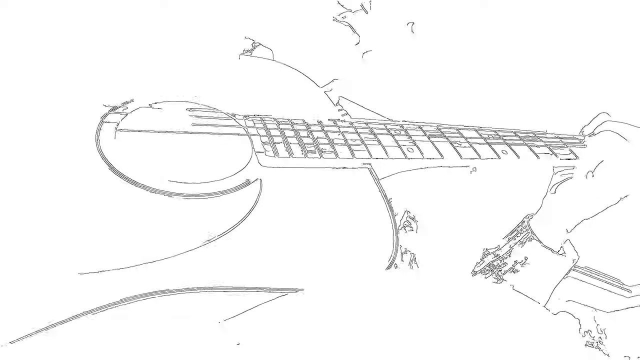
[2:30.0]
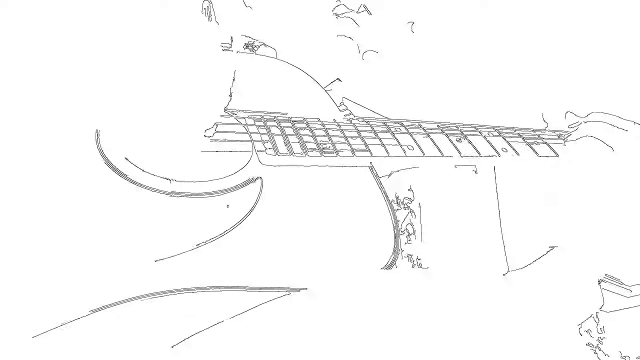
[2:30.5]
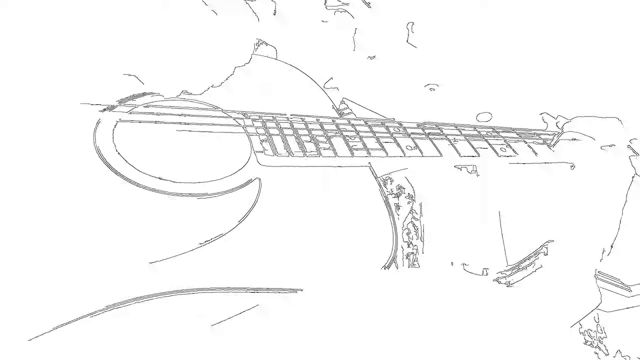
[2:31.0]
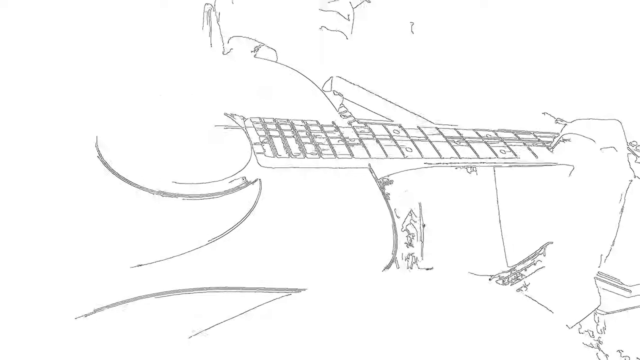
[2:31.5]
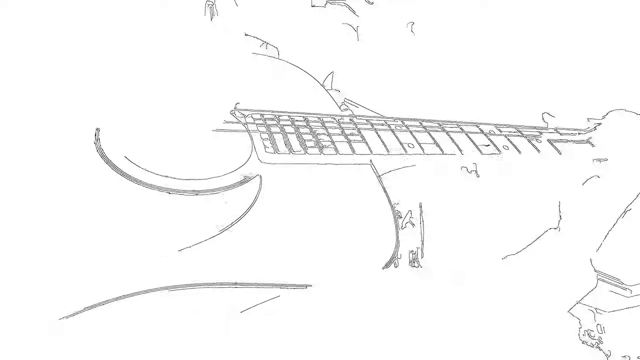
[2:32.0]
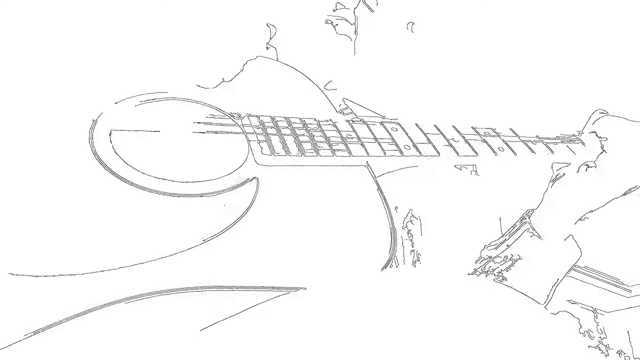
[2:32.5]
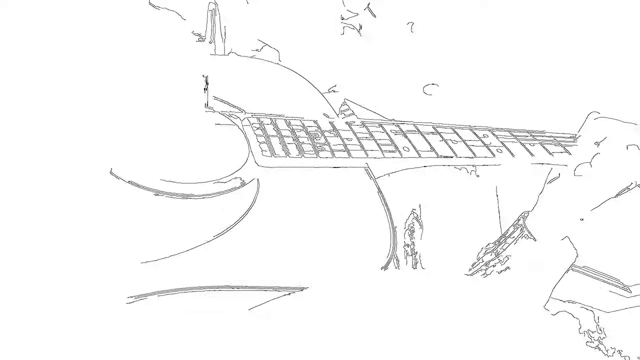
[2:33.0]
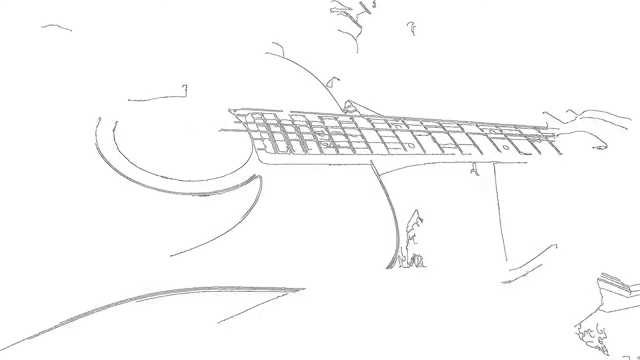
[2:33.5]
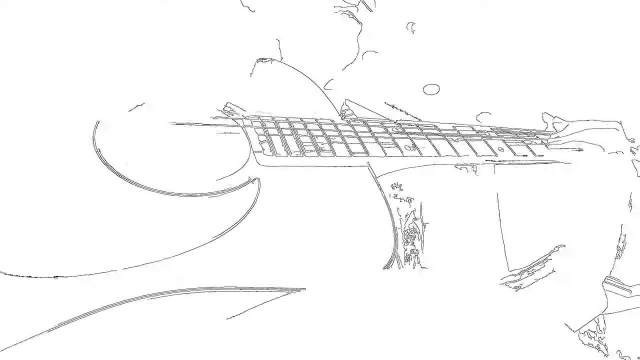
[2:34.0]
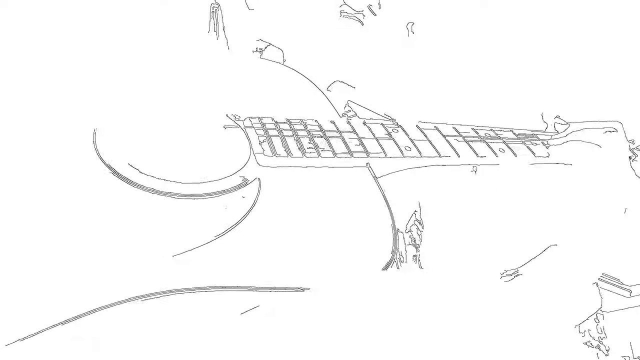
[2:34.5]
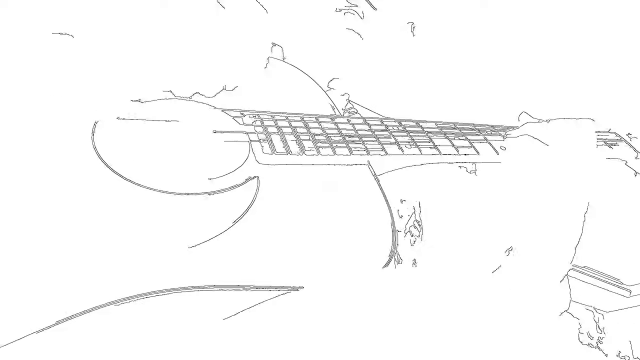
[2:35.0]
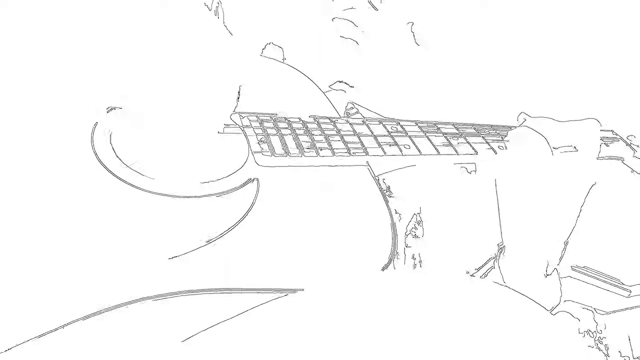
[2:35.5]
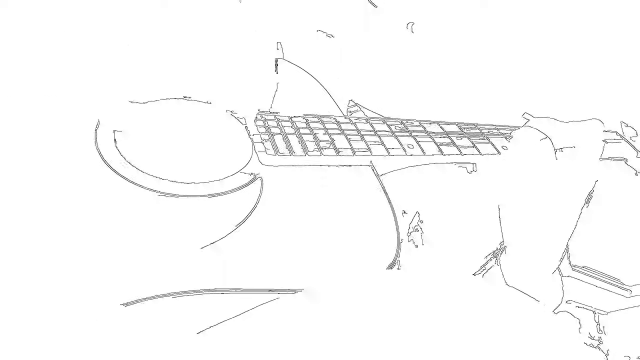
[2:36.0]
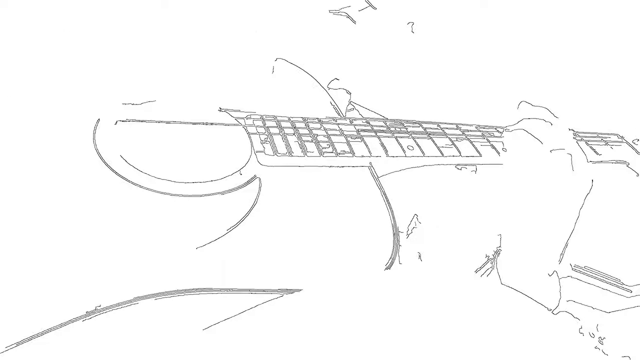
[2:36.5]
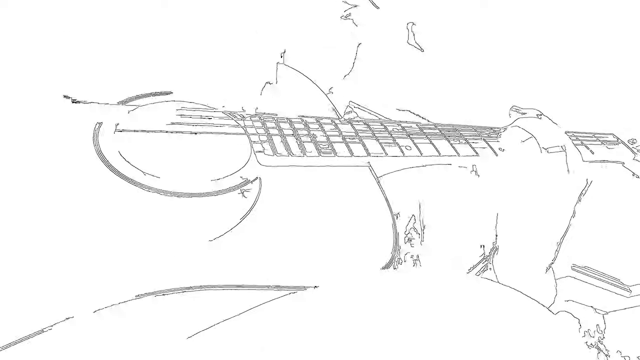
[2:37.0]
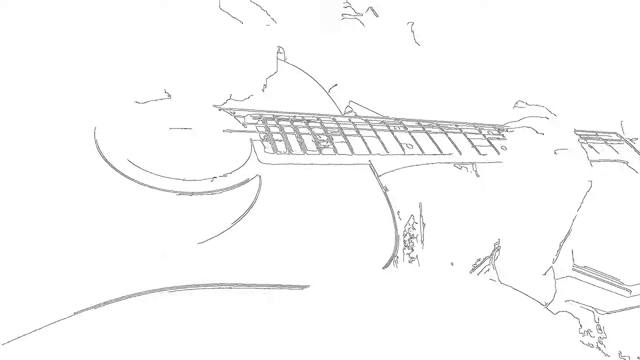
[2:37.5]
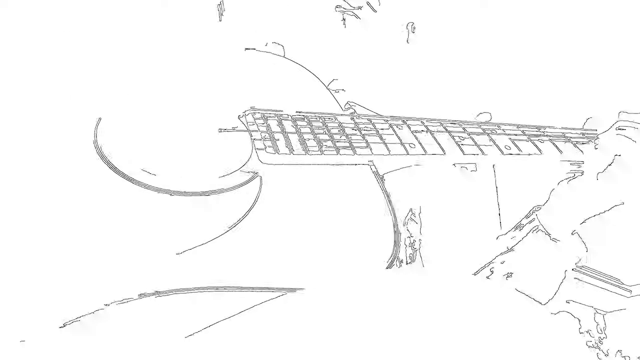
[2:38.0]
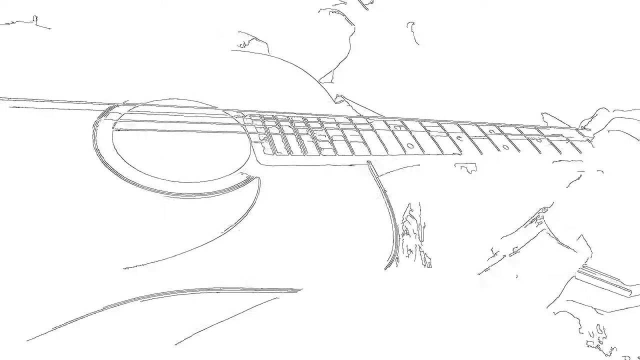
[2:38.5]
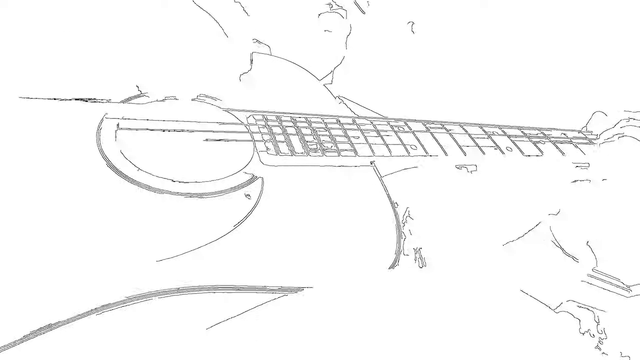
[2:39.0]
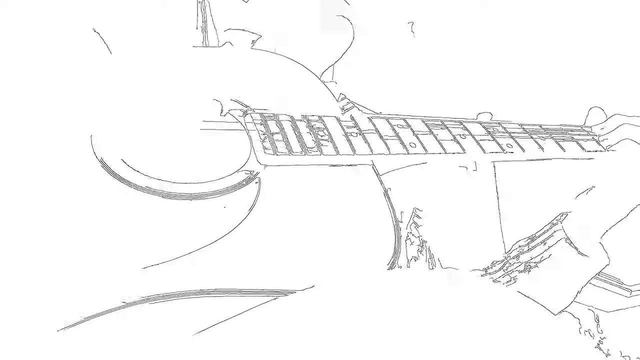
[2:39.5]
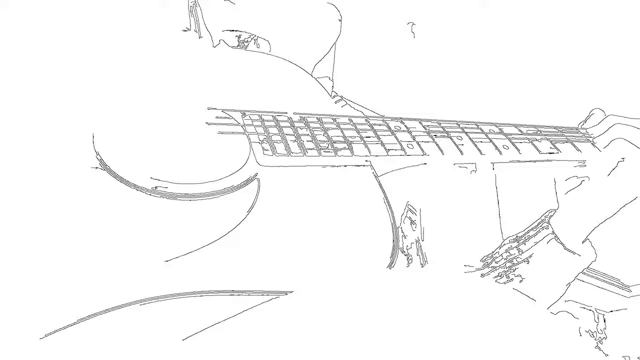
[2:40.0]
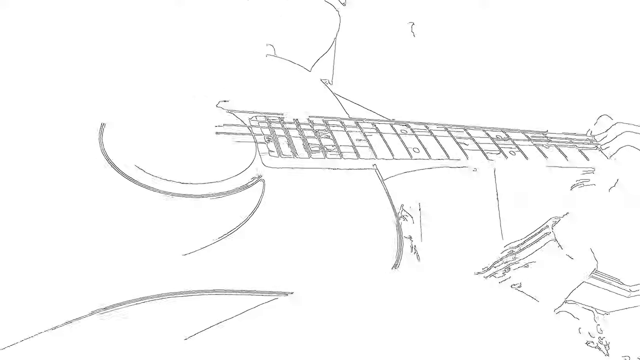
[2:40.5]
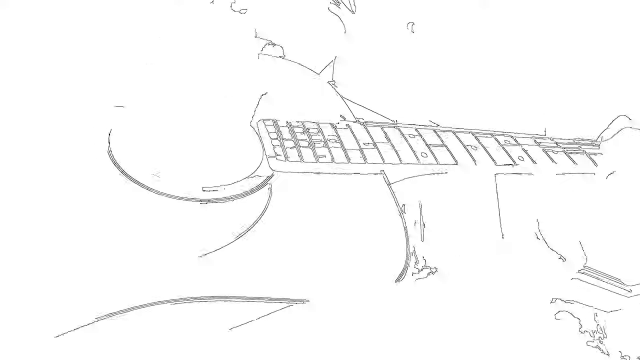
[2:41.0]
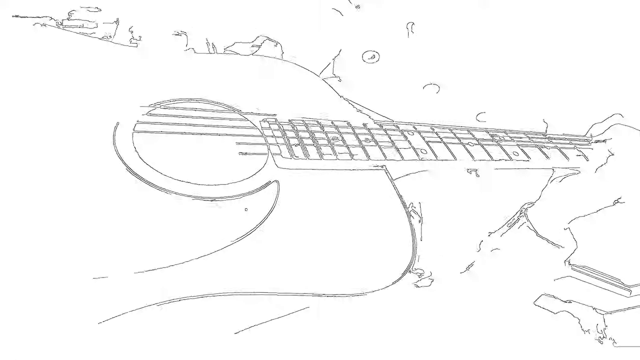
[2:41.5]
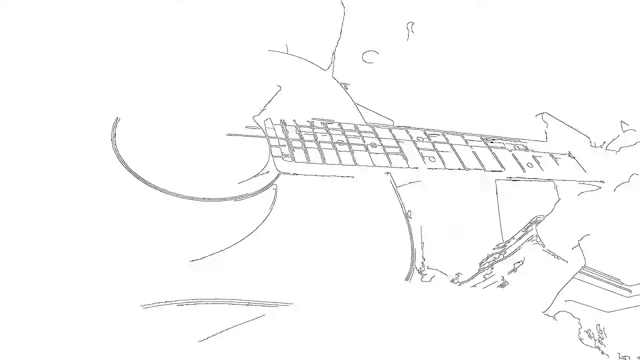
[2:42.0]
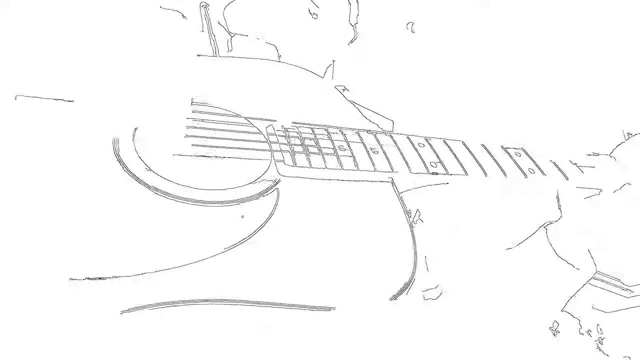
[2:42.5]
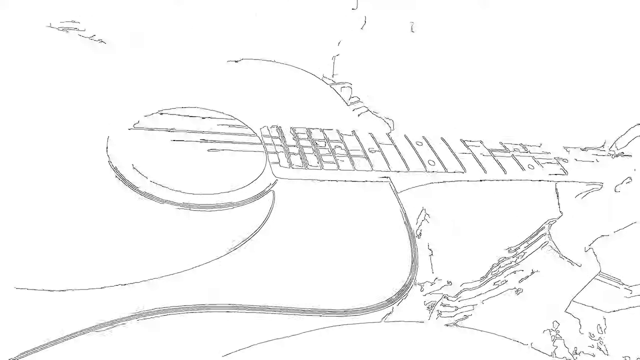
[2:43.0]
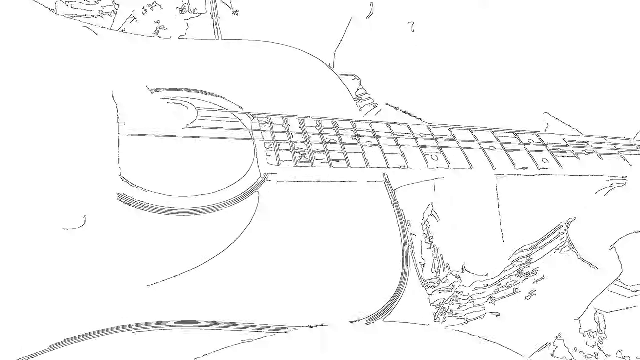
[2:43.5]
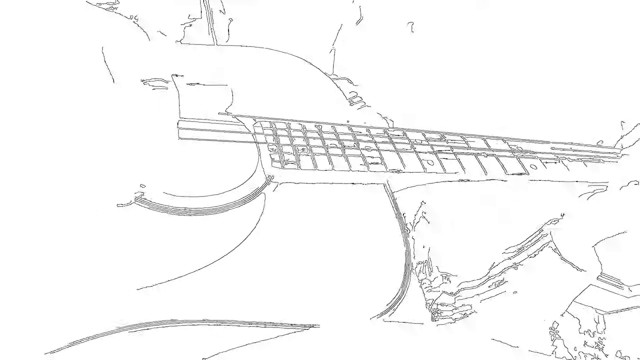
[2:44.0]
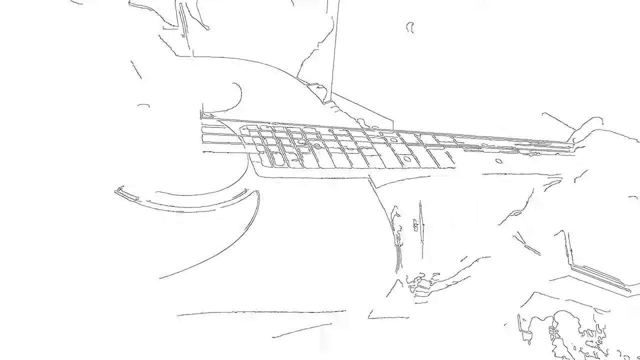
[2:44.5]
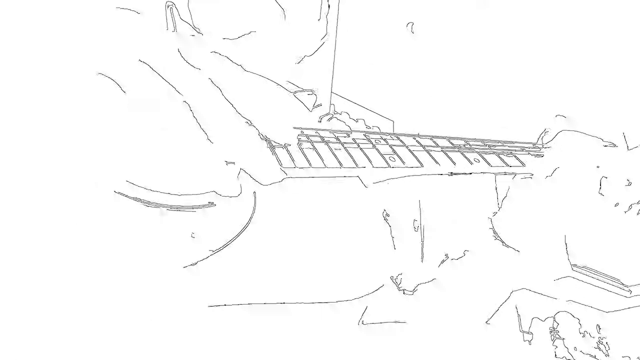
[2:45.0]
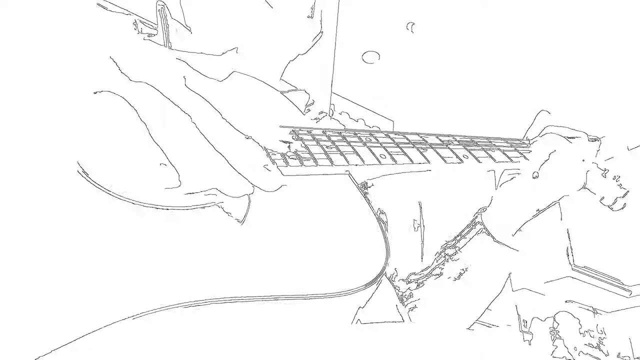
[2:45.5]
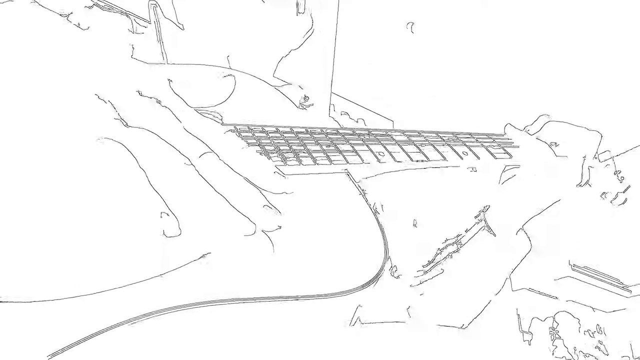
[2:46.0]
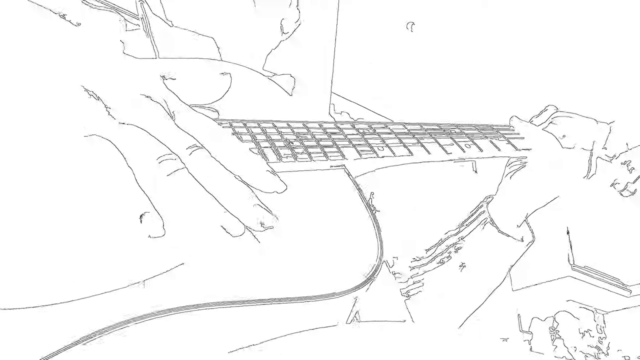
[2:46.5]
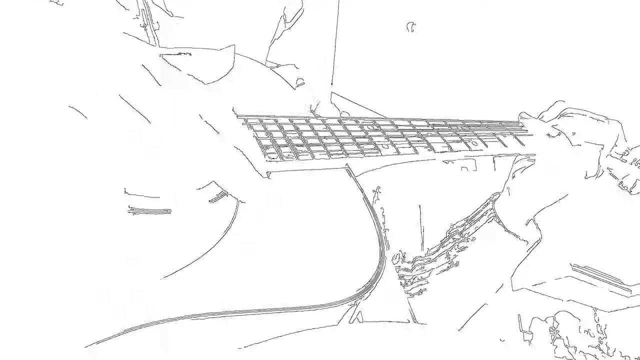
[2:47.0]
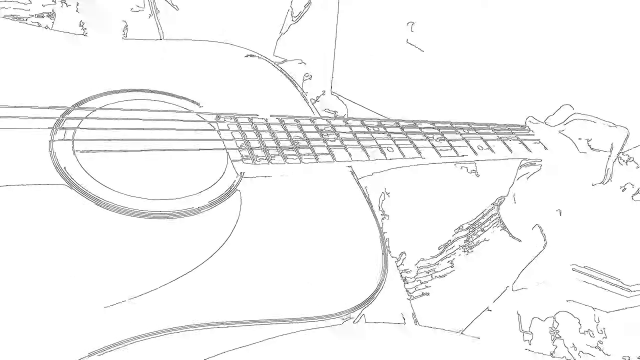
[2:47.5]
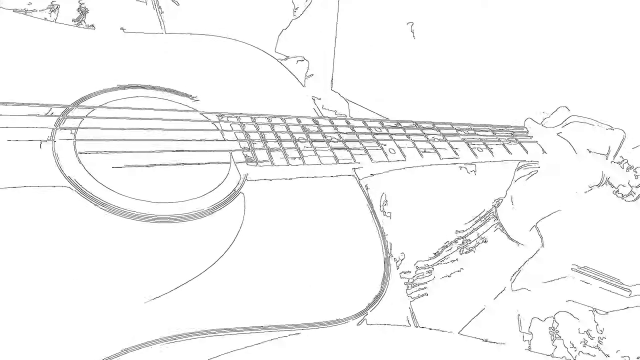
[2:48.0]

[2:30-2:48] The man begins to play a bit more up-tempo again, as though nearing the end of the song. He sits back or leans back on whatever he is sitting on, so the whole lower half of his face is visible, and his glasses dip into frame. At certain points he puts his entire palm on the front of the guitar before strumming again, showing that his fingernails are on the longer side and that he wears a wedding band on his left hand. Besides the zip-up cardigan, he wears what looks like a button-up dress shirt underneath, and he wears a pair of eyeglasses. The kitchen behind him seems fairly modern, with recessed lighting and cabinets with storage space above. Little of the counter can be made out, but there are different items such as cooking utensils and other possible cooking items; the stove itself is not visible. The camera is almost at knee height, as if on a counter or table in front of him, and mostly the lower half of his face is visible as he sings, as though into a microphone or acoustically just out of the camera's range. Nearing the end of the song he strums with less of his hand, and toward the end he lays his hand flat on the strings.